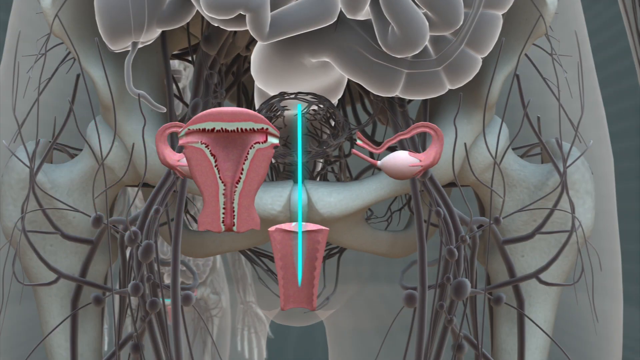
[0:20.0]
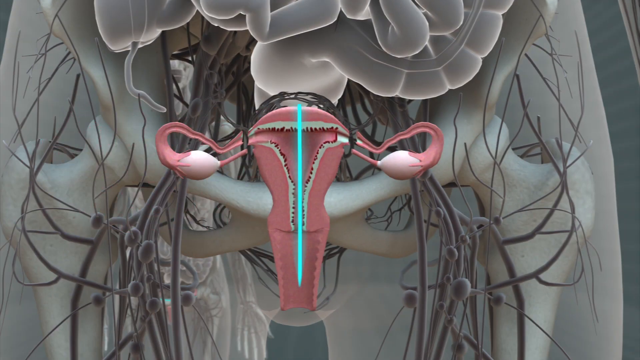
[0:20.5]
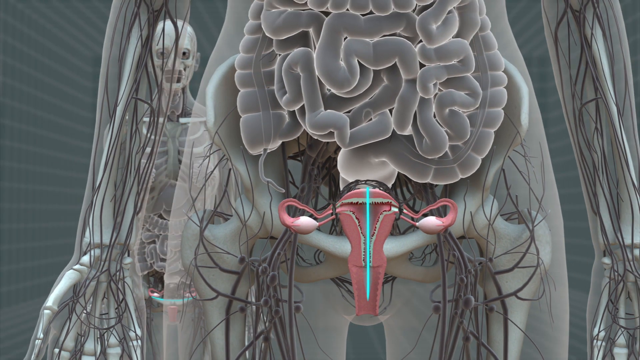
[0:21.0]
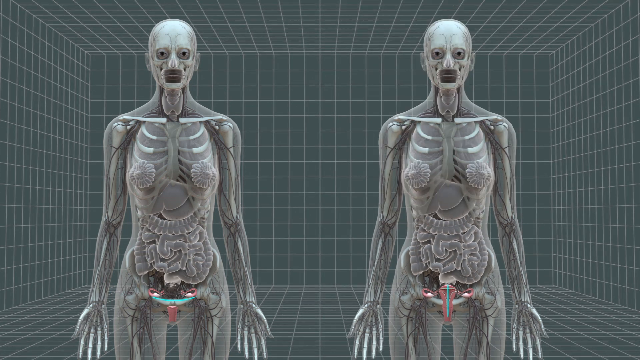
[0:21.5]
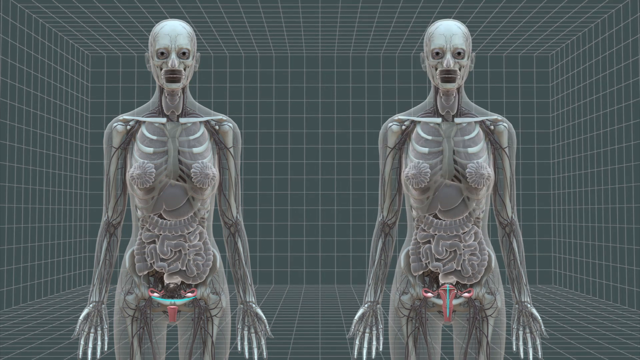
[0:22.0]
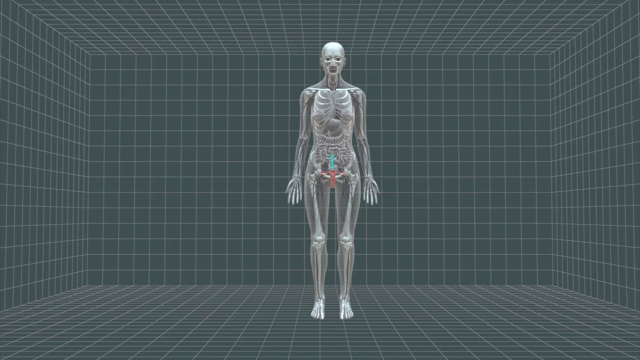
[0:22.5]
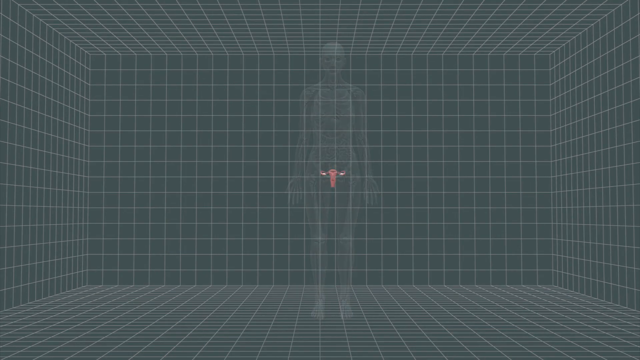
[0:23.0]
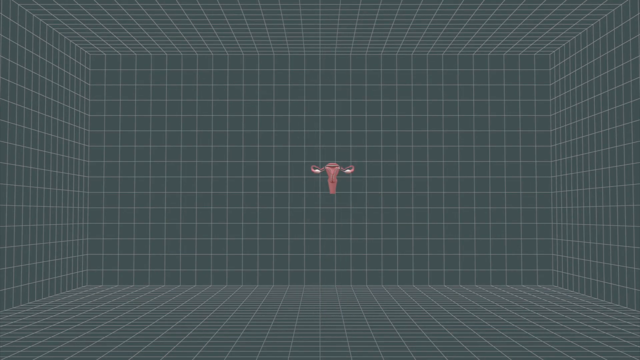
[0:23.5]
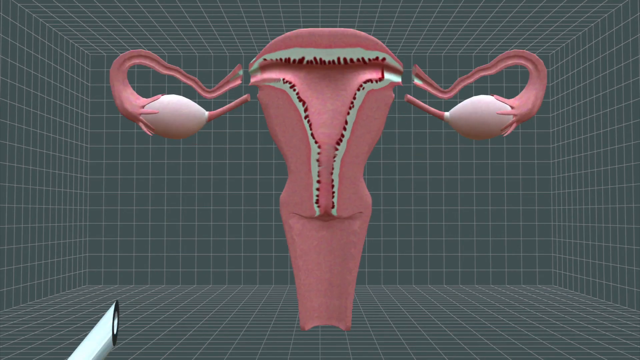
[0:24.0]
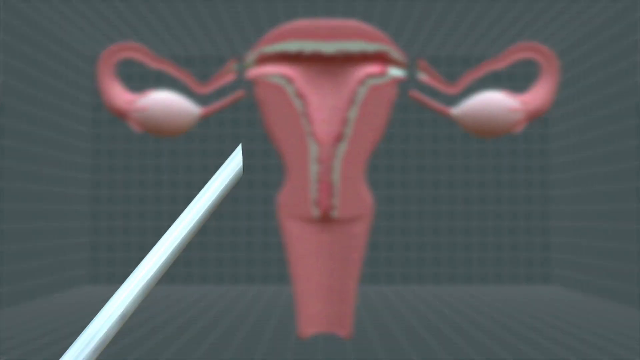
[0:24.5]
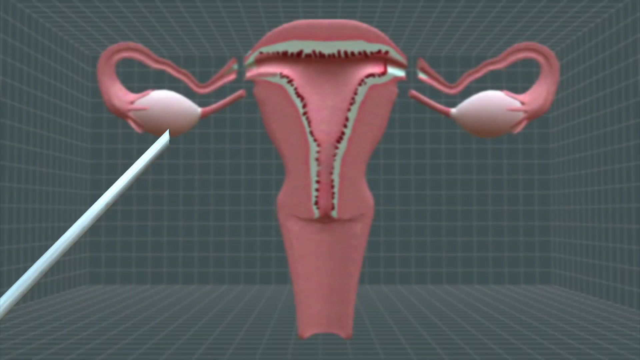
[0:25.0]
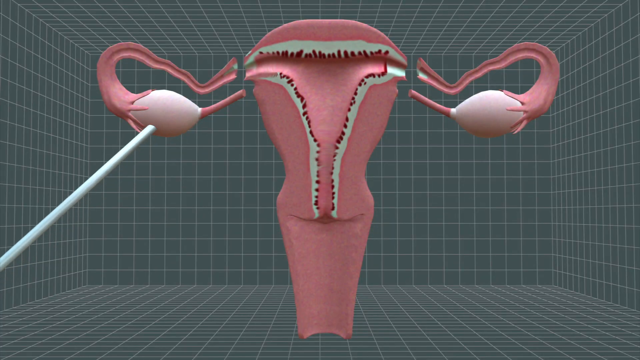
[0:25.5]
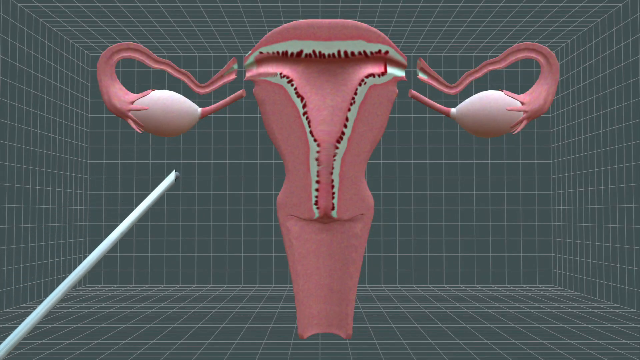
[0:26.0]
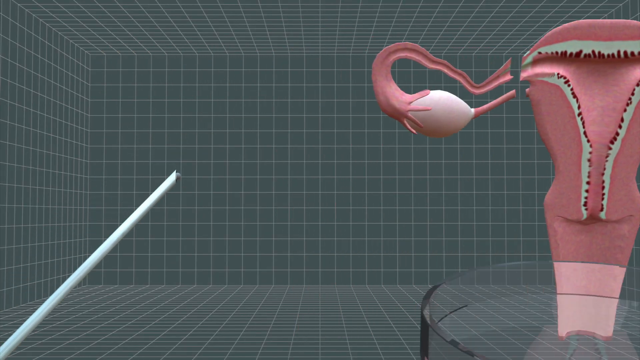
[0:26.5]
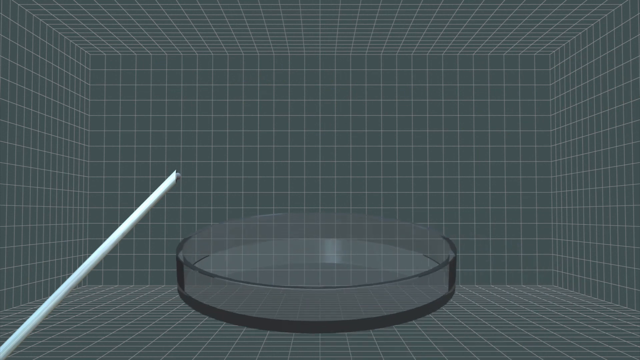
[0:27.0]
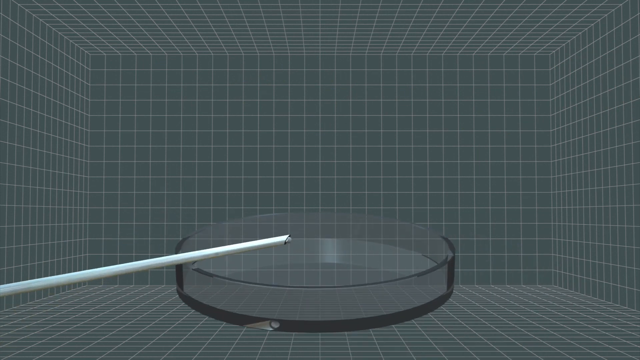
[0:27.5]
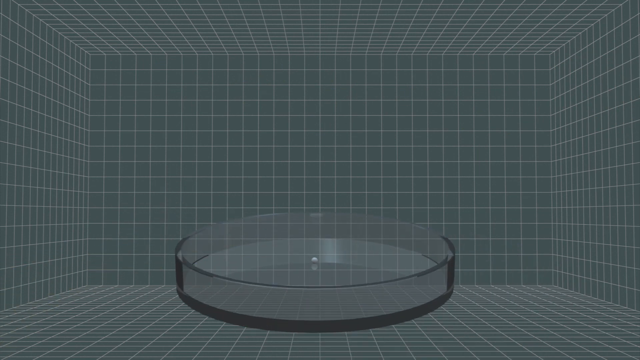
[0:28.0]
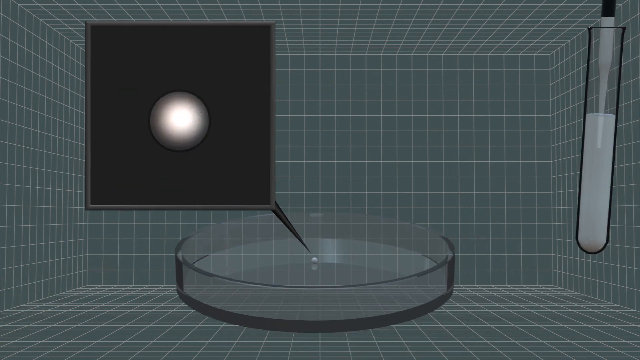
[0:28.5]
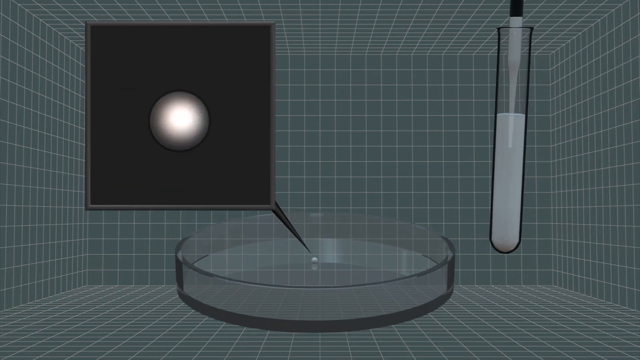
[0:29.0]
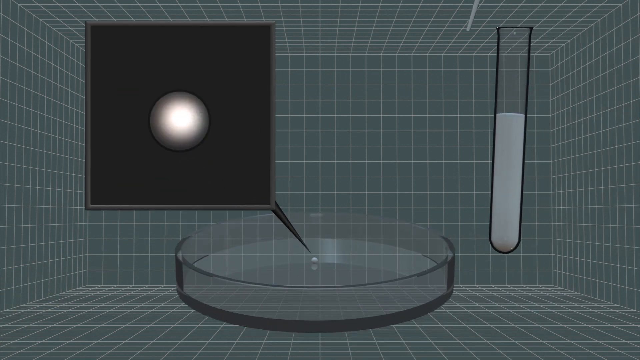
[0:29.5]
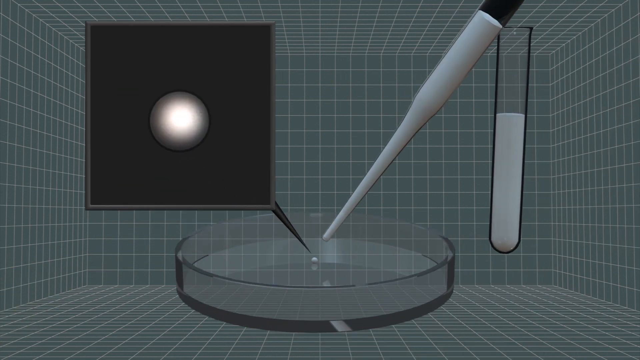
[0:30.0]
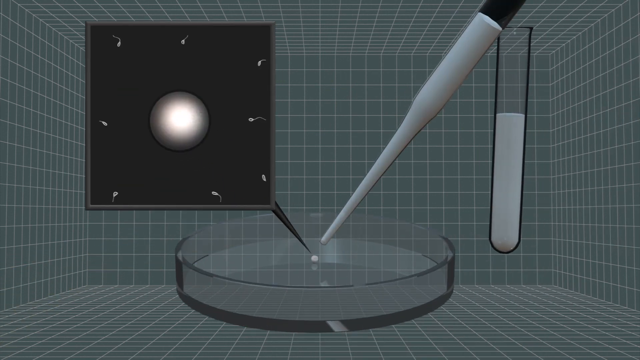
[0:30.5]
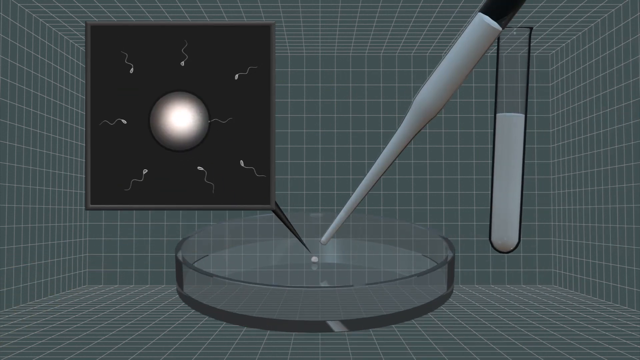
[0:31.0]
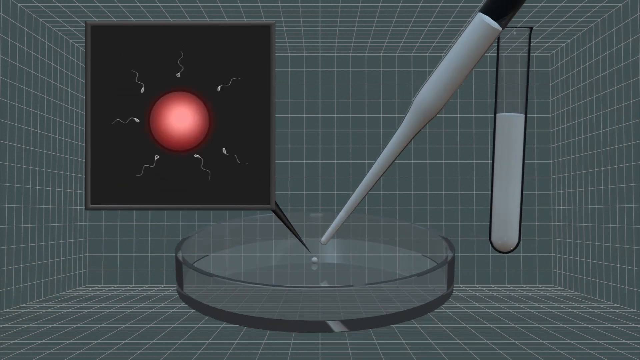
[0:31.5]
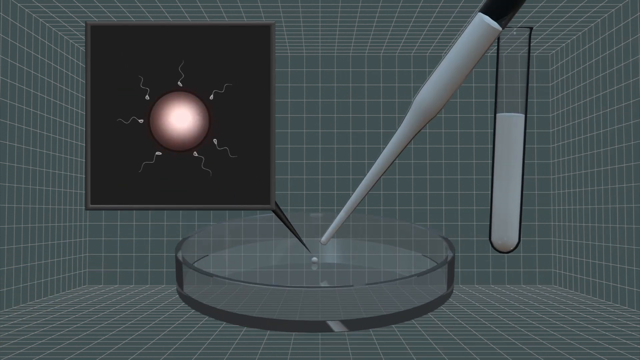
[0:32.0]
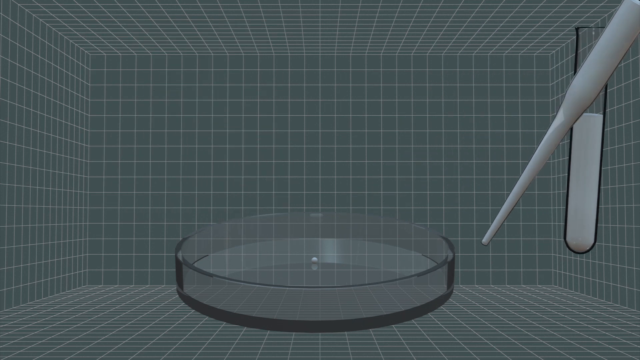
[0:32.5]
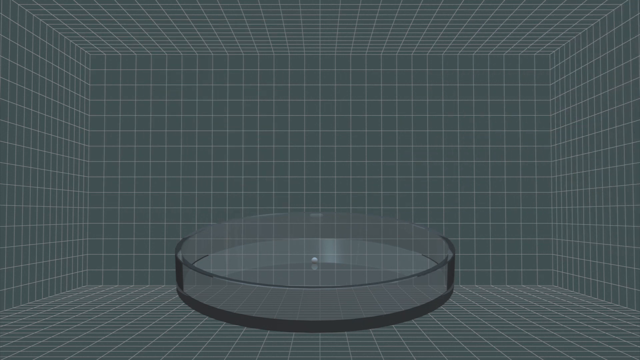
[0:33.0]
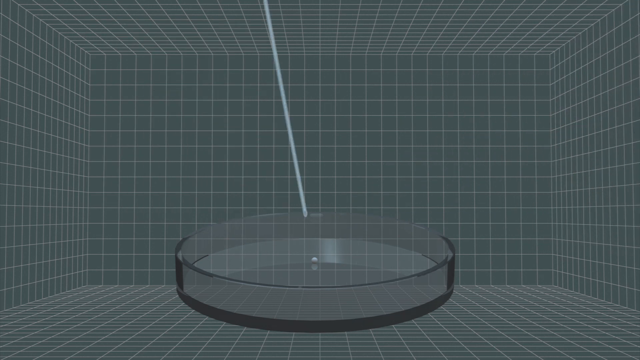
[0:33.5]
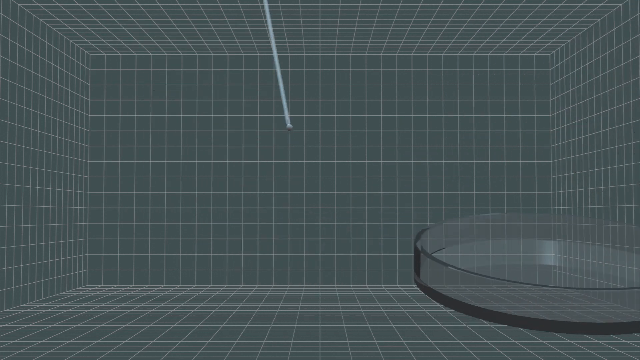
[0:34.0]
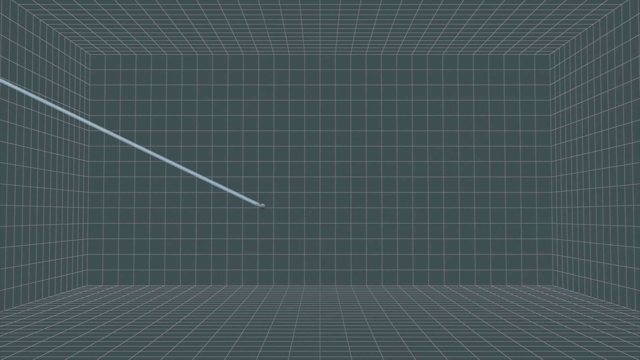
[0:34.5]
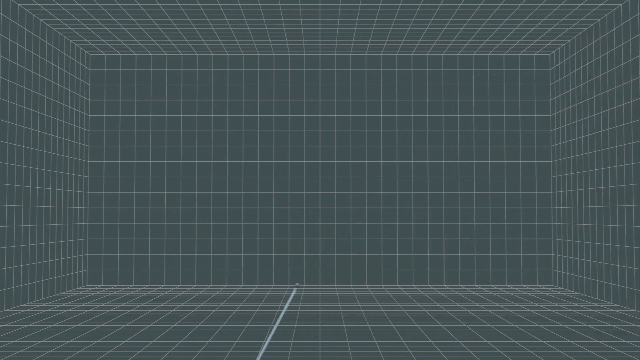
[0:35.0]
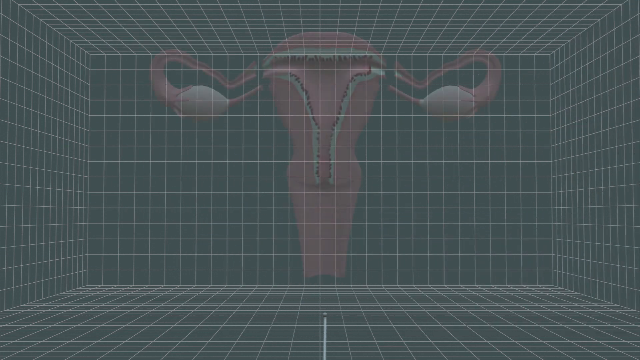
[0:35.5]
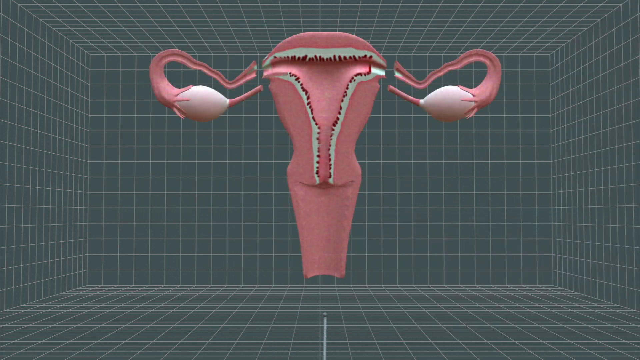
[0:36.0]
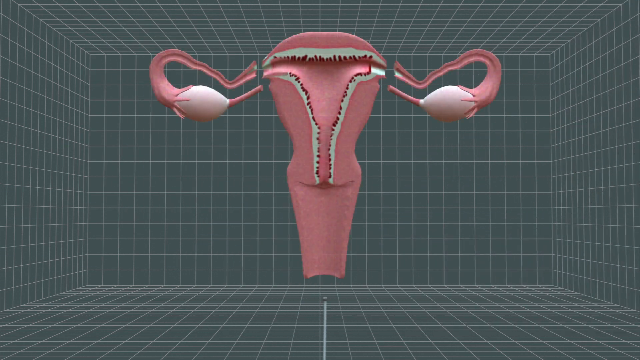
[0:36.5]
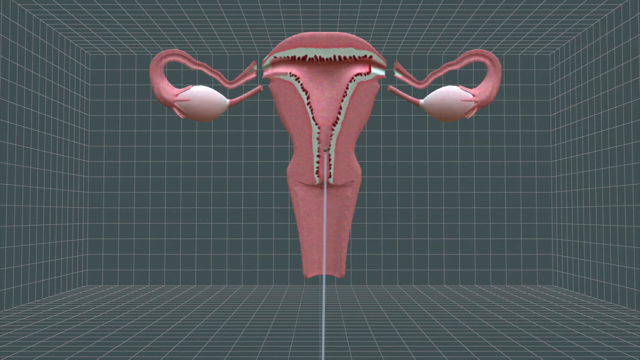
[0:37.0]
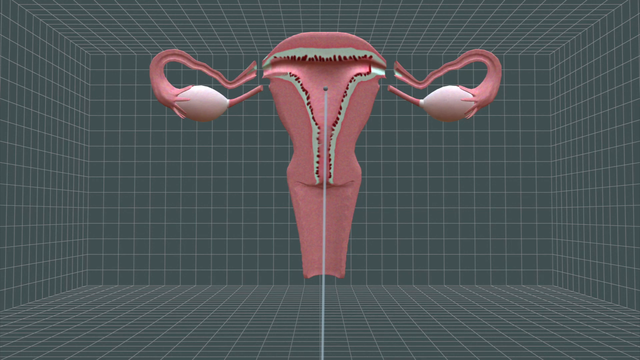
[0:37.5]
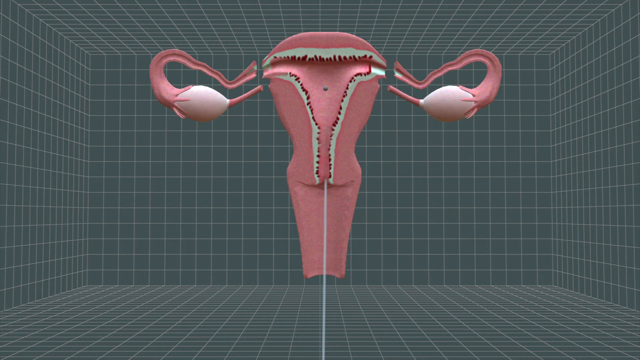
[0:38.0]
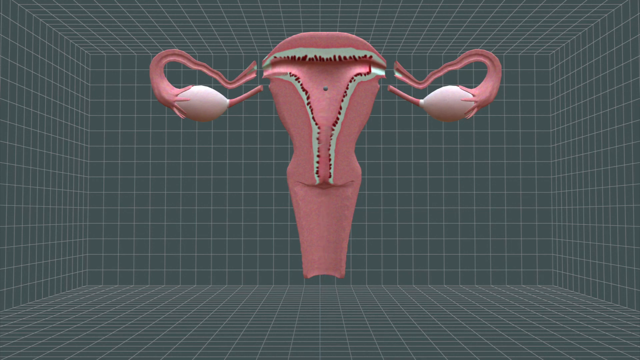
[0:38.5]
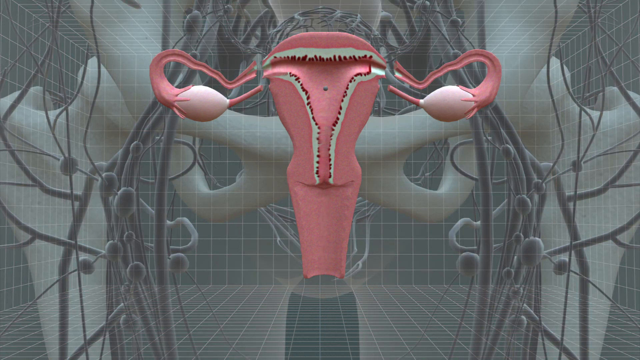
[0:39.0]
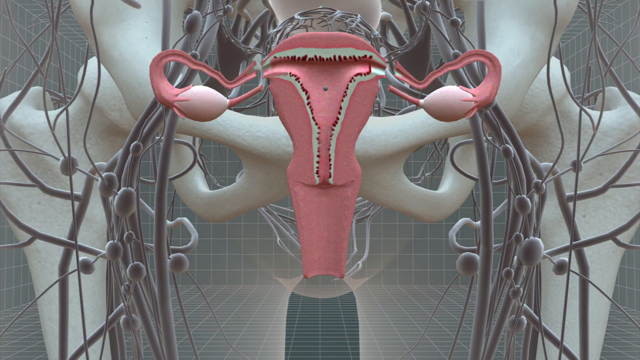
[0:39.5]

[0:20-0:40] The piece is back in the opening of the figure on the right, and the blue-green teal line is still centered in front. The two images are reduced similarly and now look similar. Everything then goes back to a single sort of plastic diagram of a person. The only thing on the screen is the pink, kind of transplanted female reproductive organ, which is expanded on the screen. A sort of grayish needle extends up, pointing to the leftmost section of an area that looks like a set of cow's horns, on the left side. There is a bulb there, and it is touched with the needle. The metal item, apparently a needle, is then placed over something like a Petri dish containing some sort of liquid. Superimposed at the top left is a pearl-like image glowing in the center and grayer on the outside, in a square. At the top right is a kind of test tube filled with a sort of milky liquid.